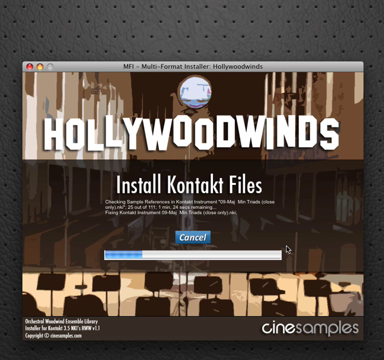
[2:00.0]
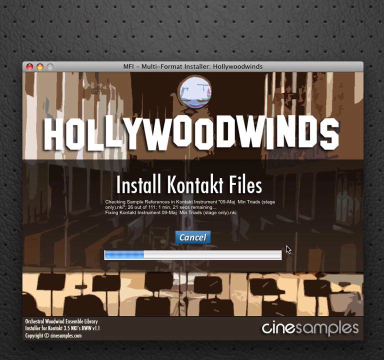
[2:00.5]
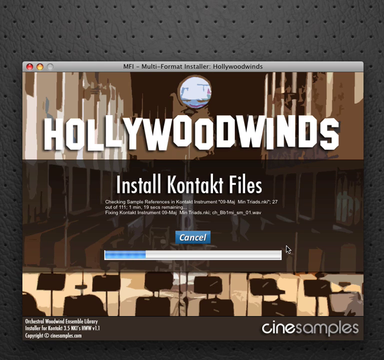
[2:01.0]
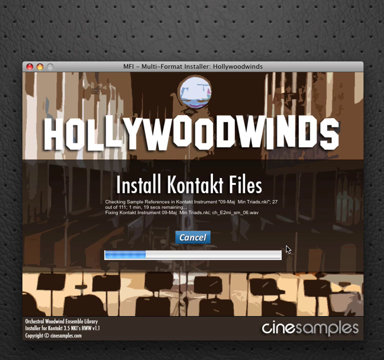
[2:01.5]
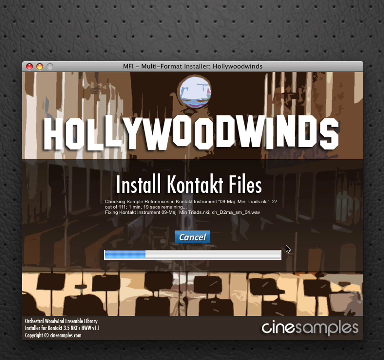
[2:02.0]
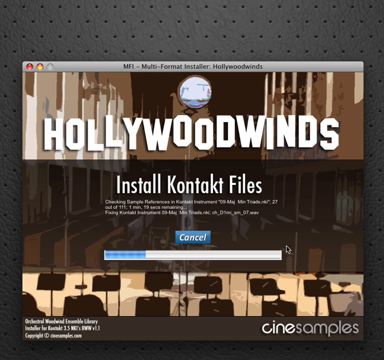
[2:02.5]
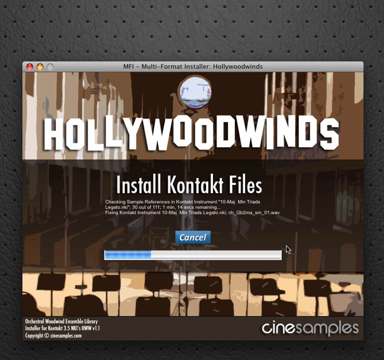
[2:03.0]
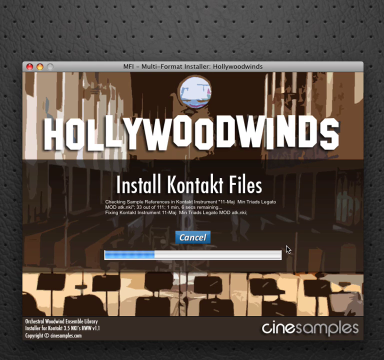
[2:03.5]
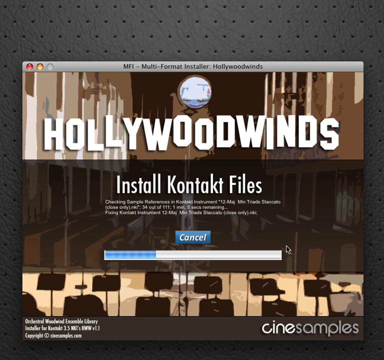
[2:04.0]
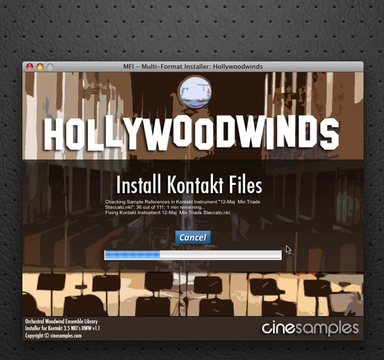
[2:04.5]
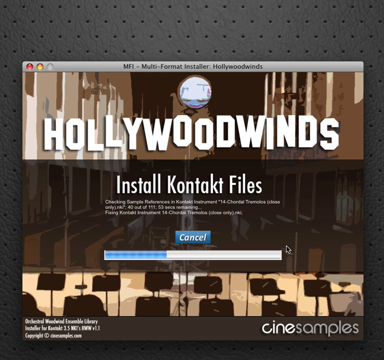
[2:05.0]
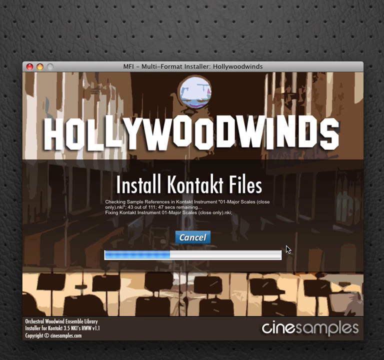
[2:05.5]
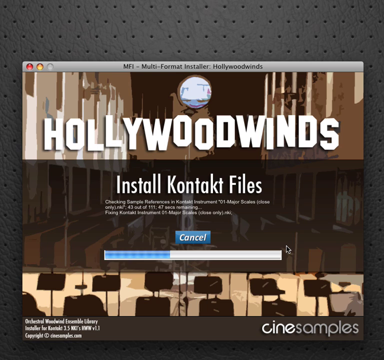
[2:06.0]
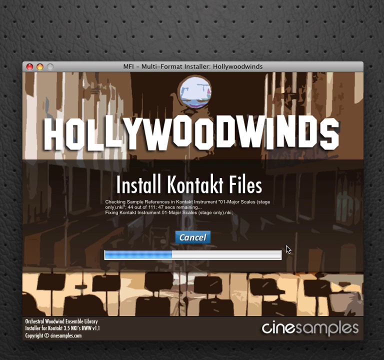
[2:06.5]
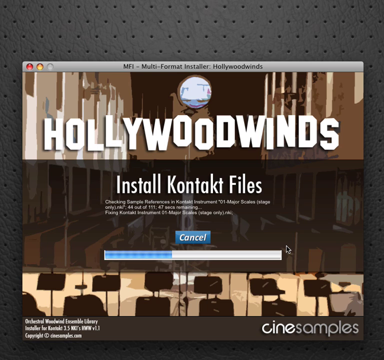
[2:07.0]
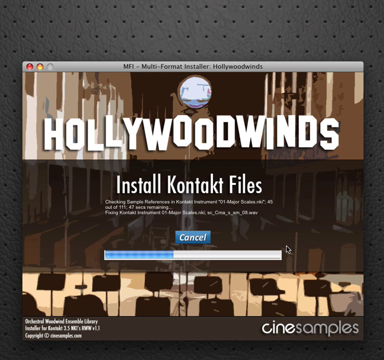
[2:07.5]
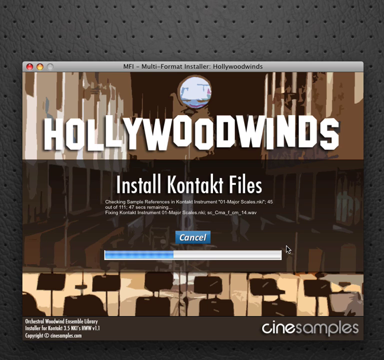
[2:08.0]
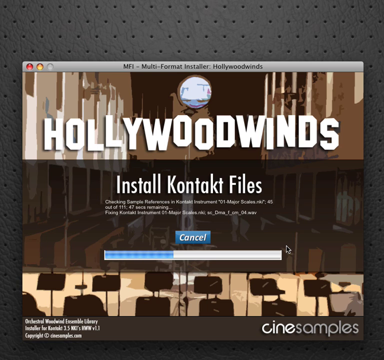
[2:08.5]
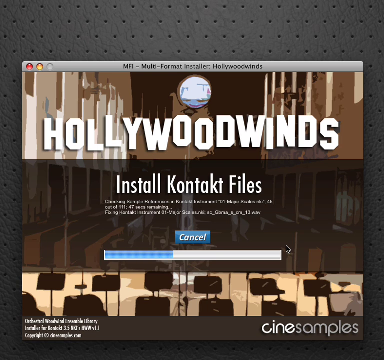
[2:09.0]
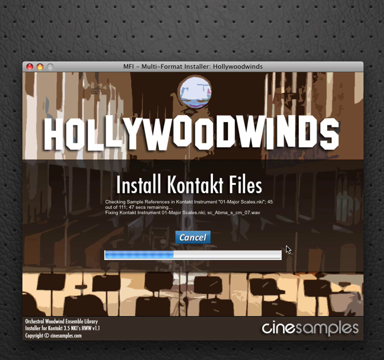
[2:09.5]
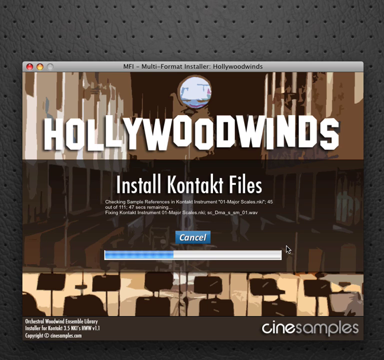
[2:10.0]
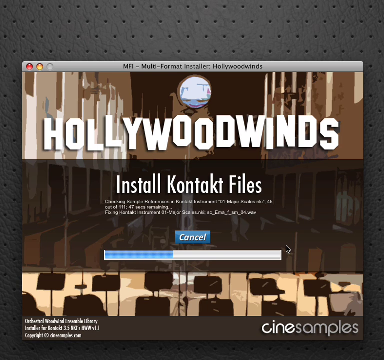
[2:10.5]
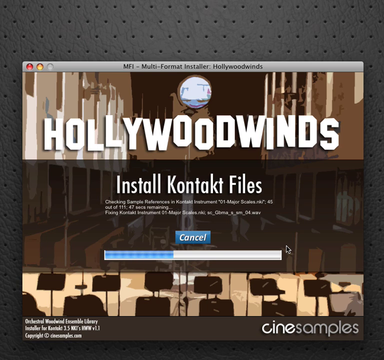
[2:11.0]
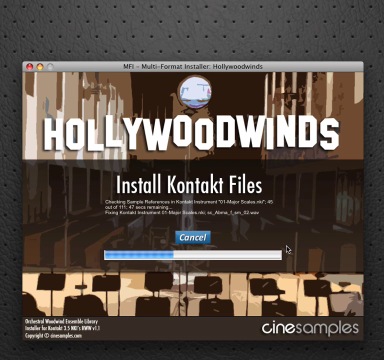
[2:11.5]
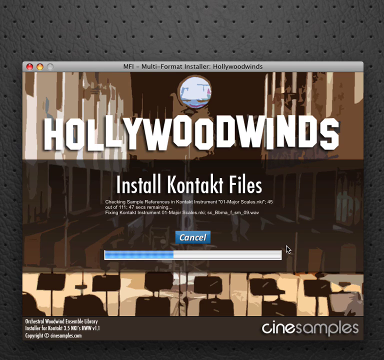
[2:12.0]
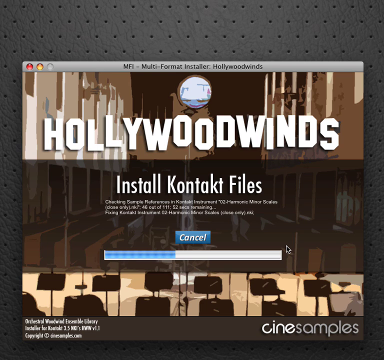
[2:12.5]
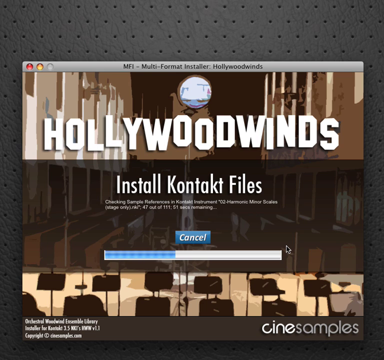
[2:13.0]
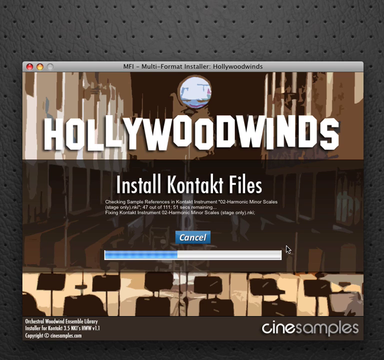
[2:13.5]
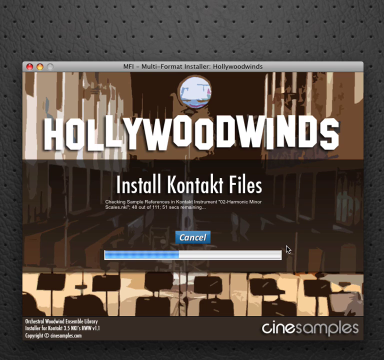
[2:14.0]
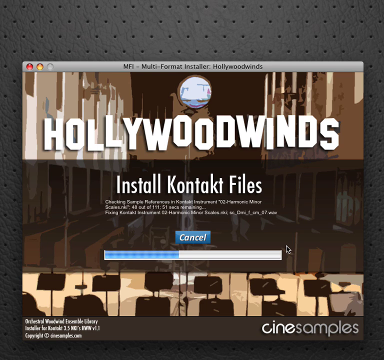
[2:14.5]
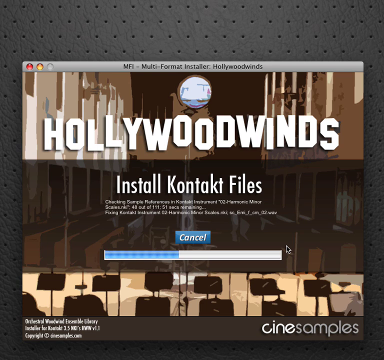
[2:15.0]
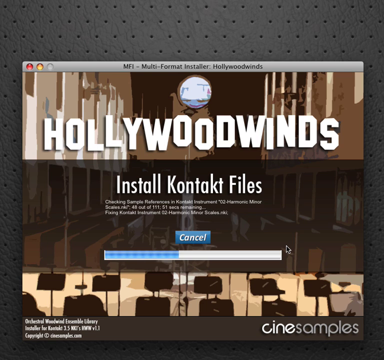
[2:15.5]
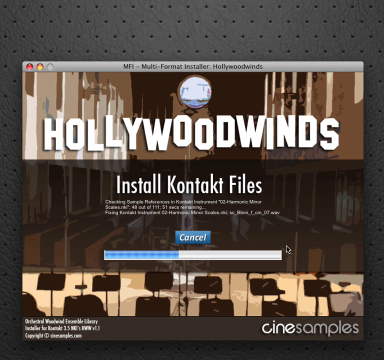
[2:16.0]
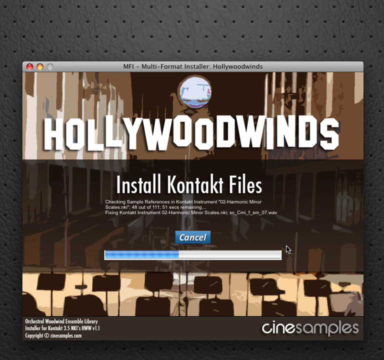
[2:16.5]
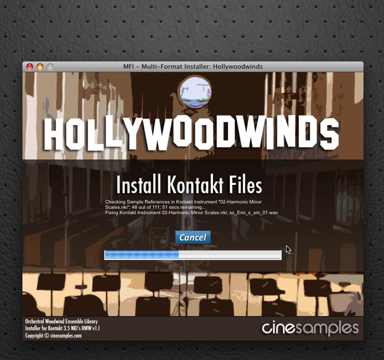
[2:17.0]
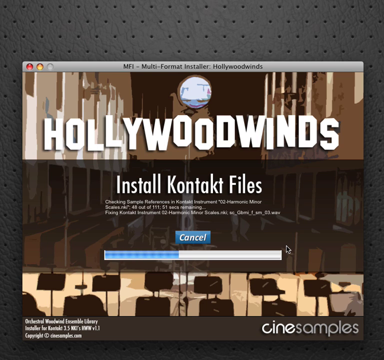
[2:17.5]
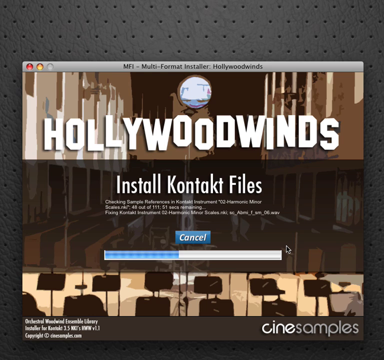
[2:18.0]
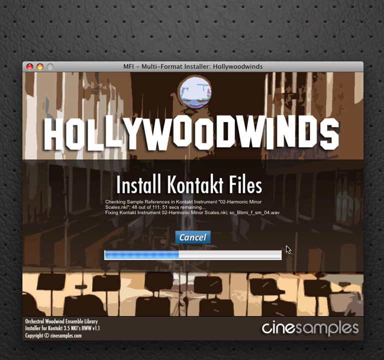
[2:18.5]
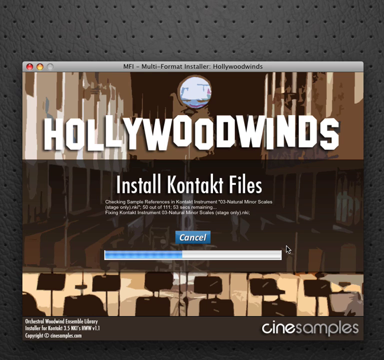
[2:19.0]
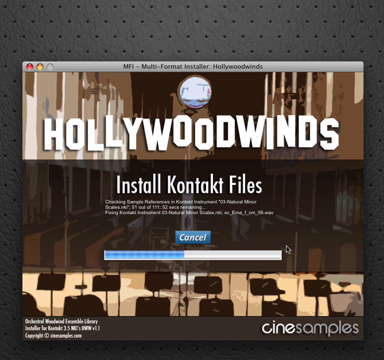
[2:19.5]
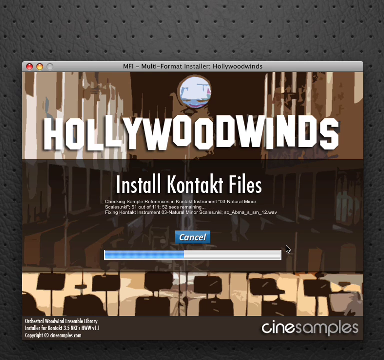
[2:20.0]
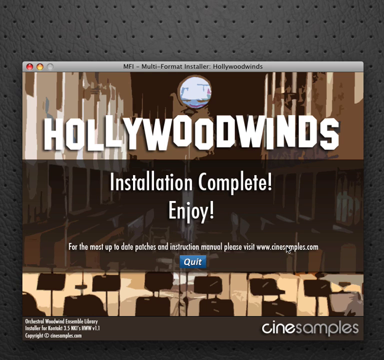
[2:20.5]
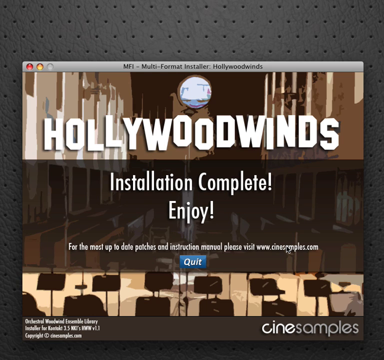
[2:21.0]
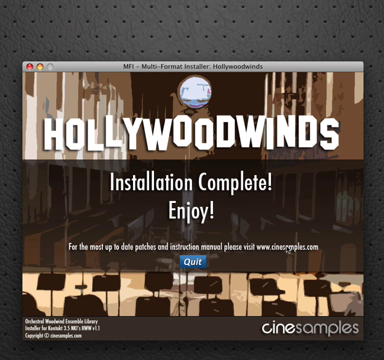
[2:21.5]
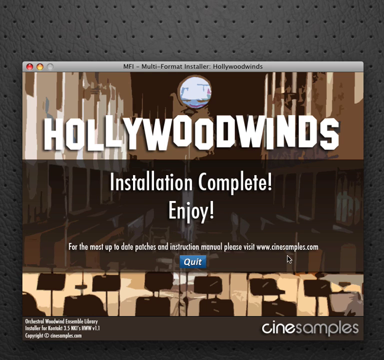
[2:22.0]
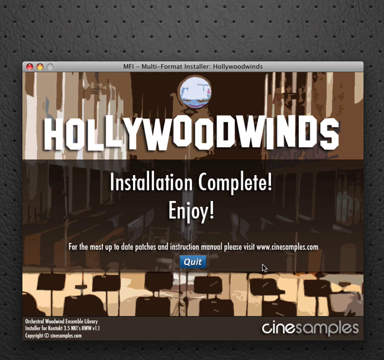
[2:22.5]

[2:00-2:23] The MFI multi format installer page and the main hollywoodwinds page reading "install kontakt files" are shown, with more files being downloaded and folders being checked. There is a cancel button, and underneath it a blue bar shows the download progress while it runs through various folders and files. A message pops up that says "installation complete, enjoy. For the most up-to-date patches and instruction manual, please visit" followed by a website, and under that "quit." The cursor moves over something, and more files download, apparently kontakt files judging by what is listed, with a blue bar showing the progress. More downloading follows as it checks more files in the kontakt files, the blue bar showing its progress.